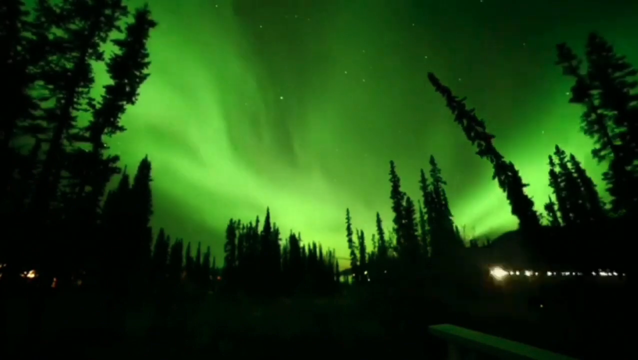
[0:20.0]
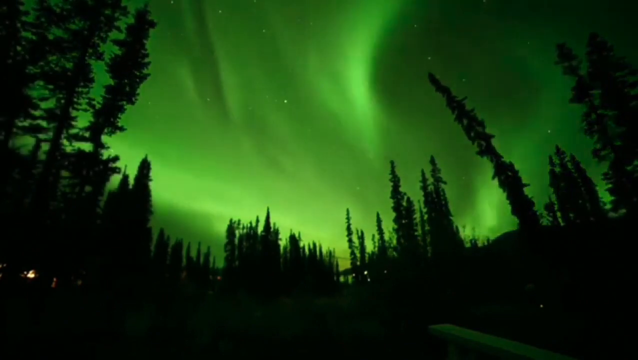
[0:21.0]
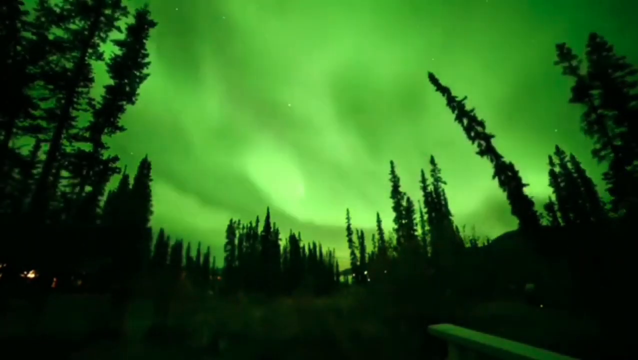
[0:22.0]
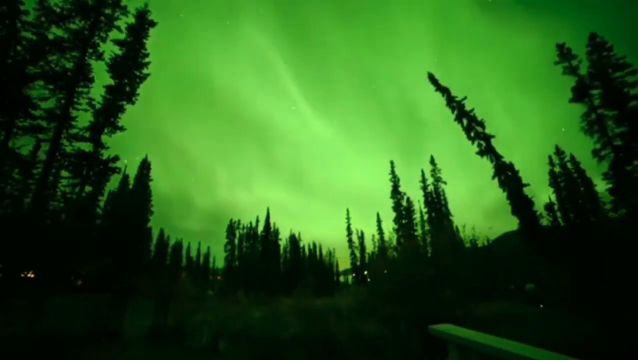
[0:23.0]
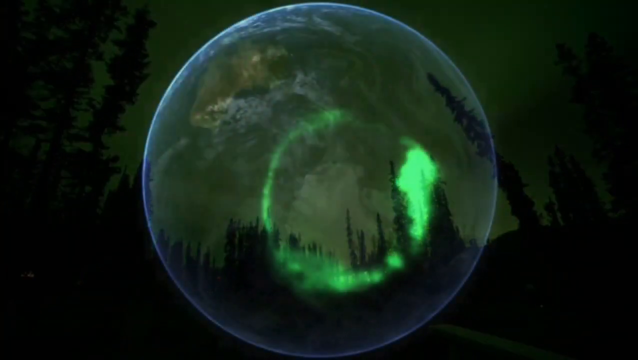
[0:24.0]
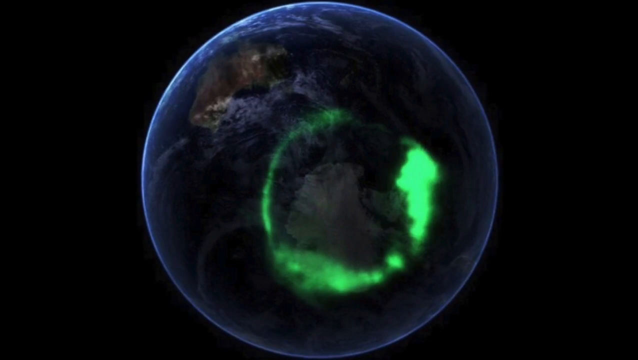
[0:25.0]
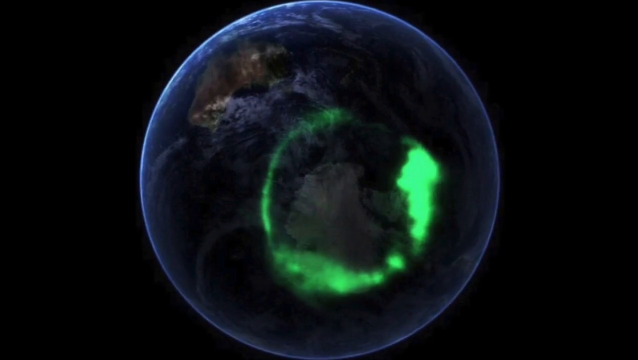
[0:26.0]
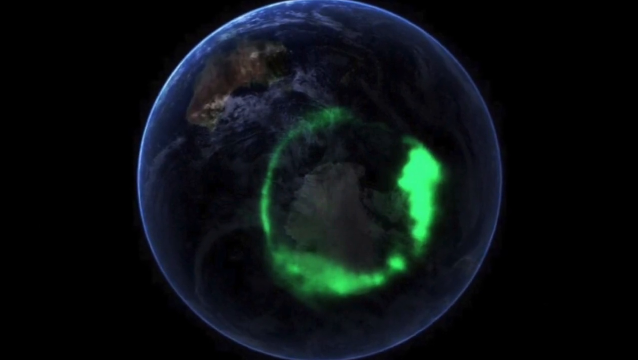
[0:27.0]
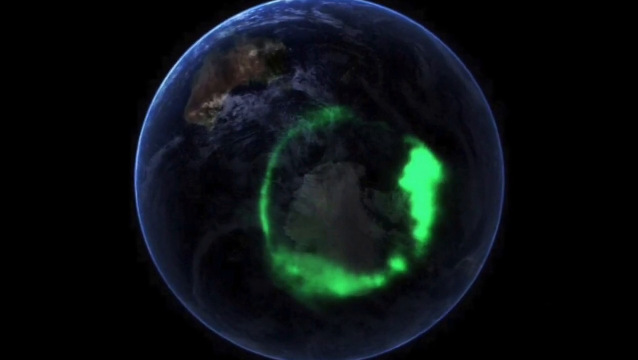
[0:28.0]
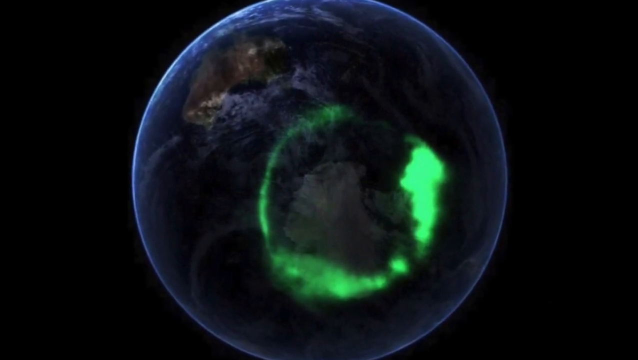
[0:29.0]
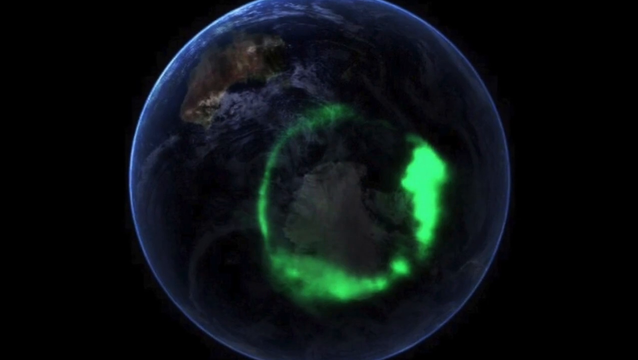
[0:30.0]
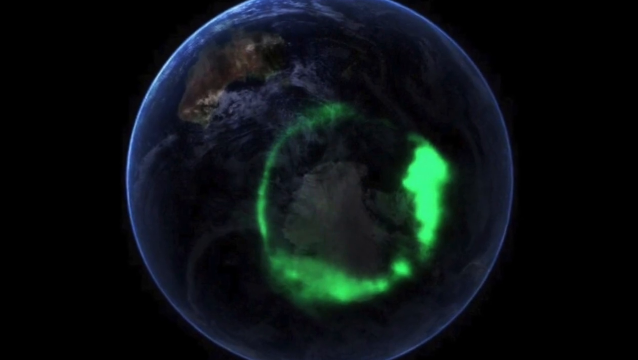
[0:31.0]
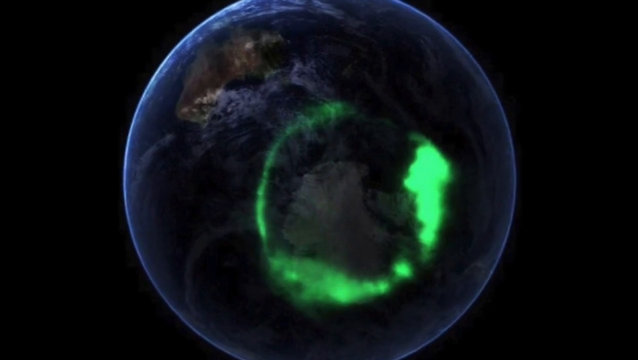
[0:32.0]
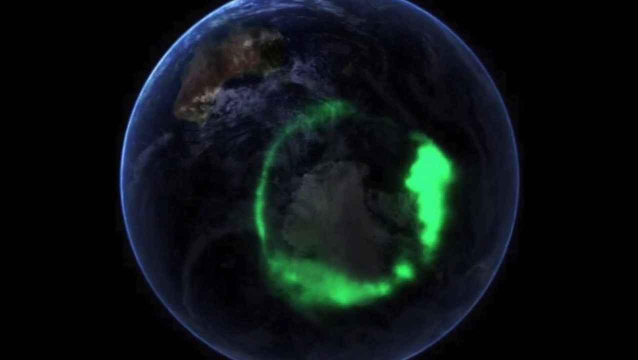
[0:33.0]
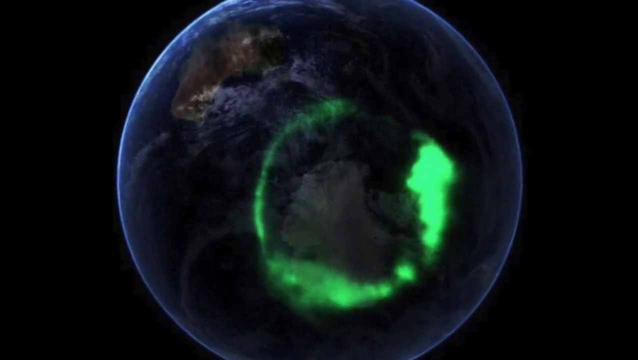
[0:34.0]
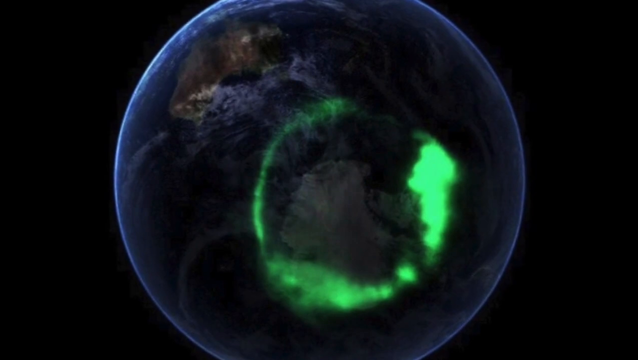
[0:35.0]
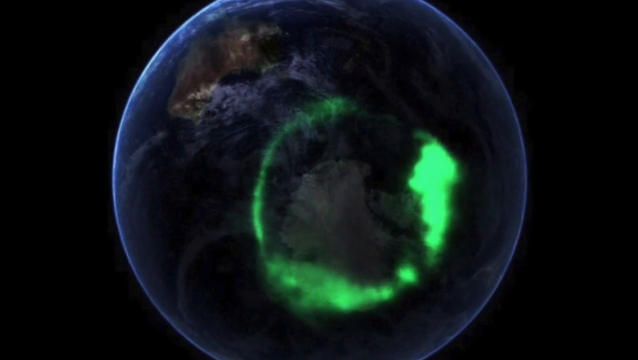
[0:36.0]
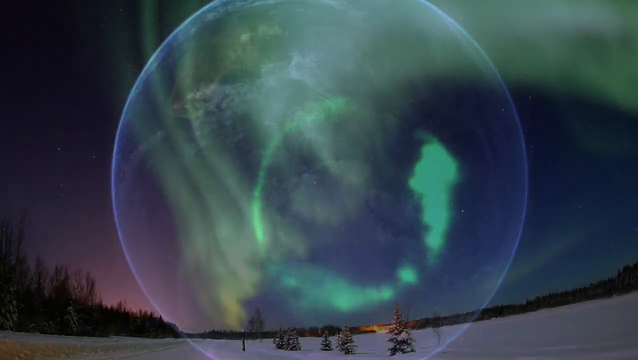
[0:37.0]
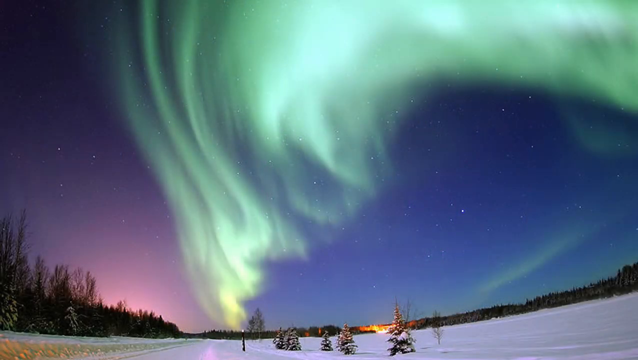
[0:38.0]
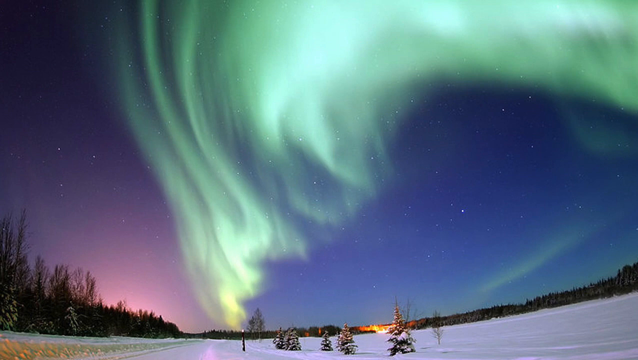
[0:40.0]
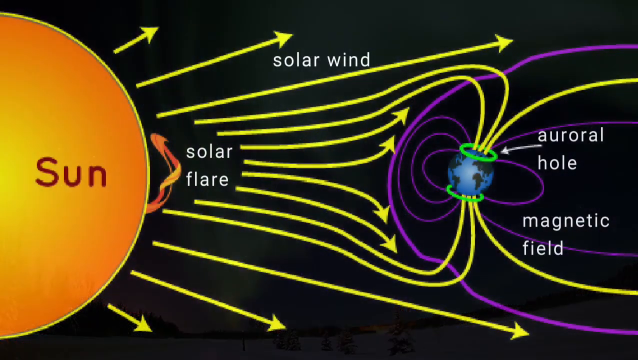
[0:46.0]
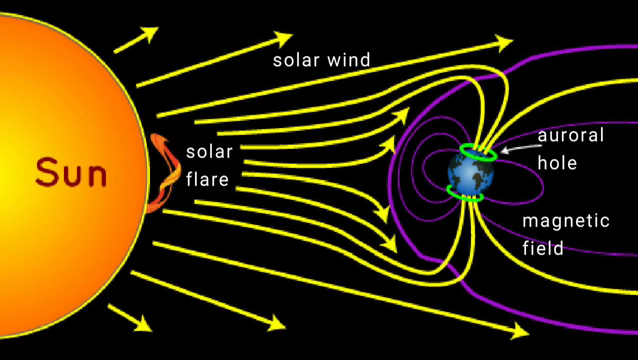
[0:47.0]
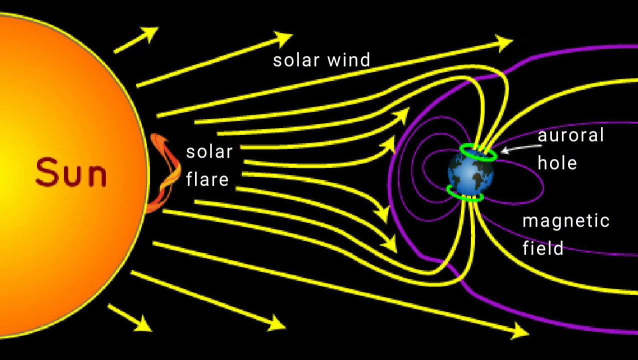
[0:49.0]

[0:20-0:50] Green lights mixed with purple and red continue in the sky, looking like moving curtains or waves that keep changing shape. After a few seconds, the spherical shape of the Earth pops up in the middle of the screen against a black background. Part of the globe has something that looks like a green circle, apparently a representation of the aurora. The Earth graphic continues zooming out and becomes bigger and bigger. The aurora is then shown one more time: the sky is purple with a patch of orange on the left side, and from the middle toward the top right the screen is covered with a green layer of clouds or the aurora effect.